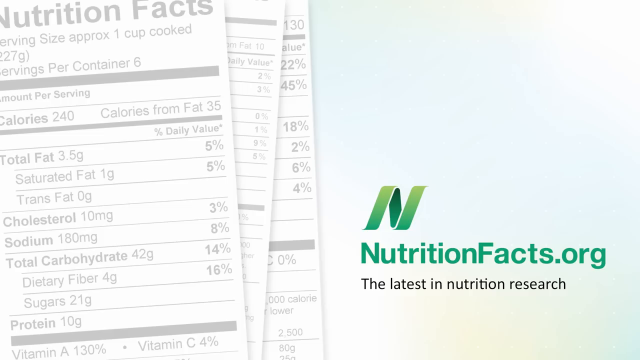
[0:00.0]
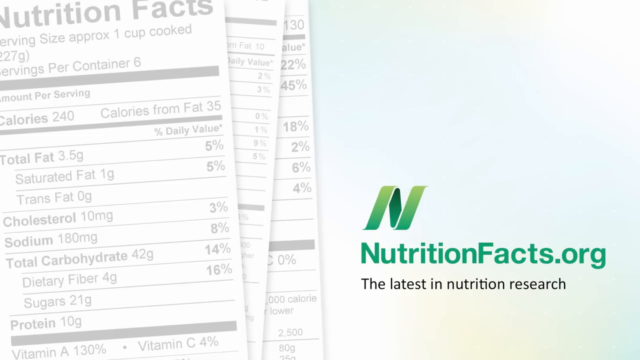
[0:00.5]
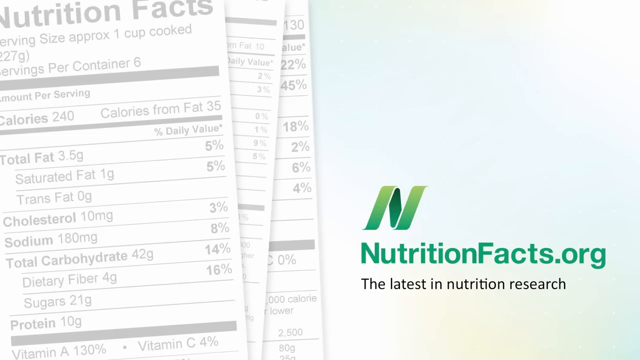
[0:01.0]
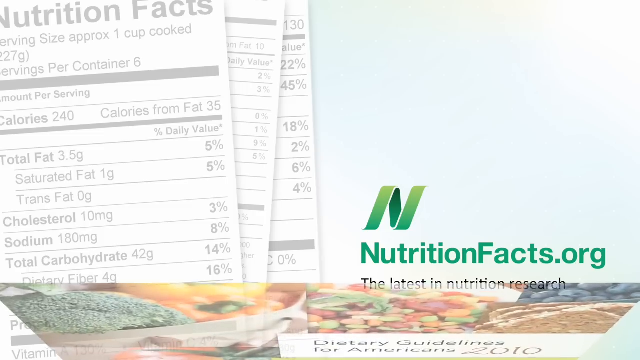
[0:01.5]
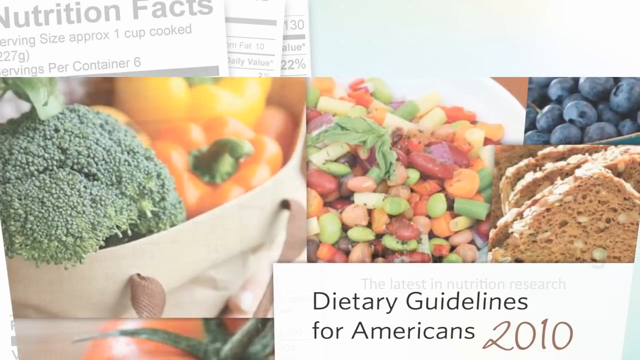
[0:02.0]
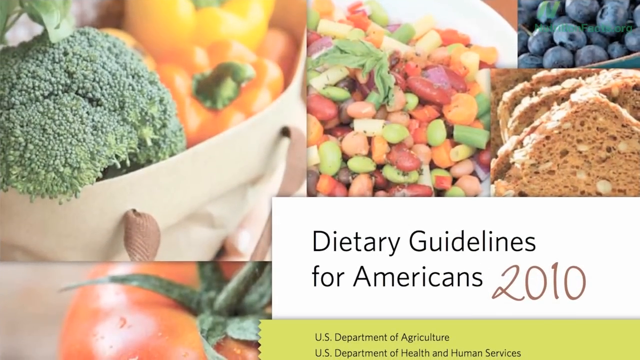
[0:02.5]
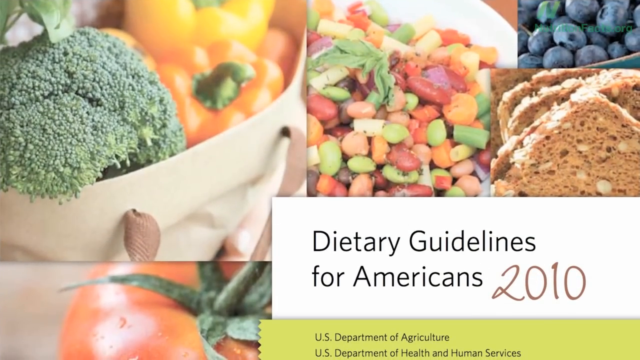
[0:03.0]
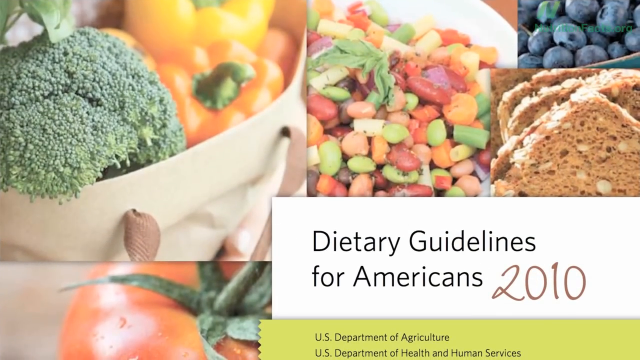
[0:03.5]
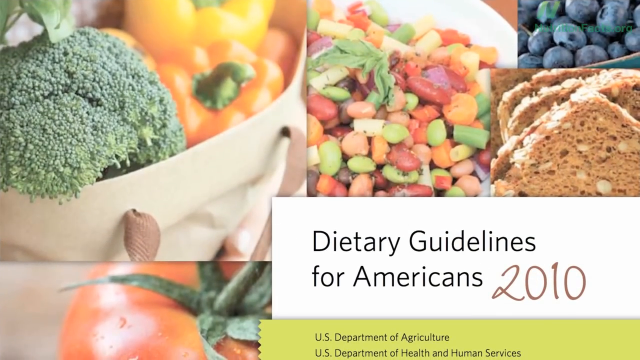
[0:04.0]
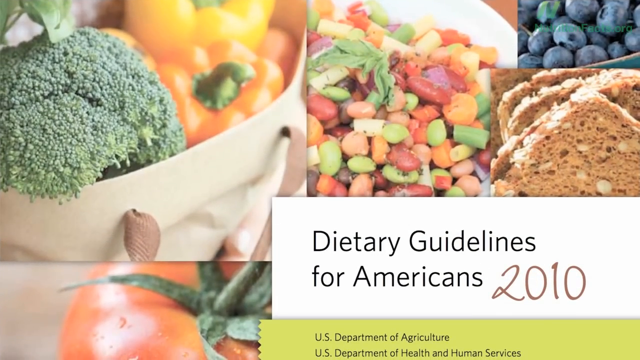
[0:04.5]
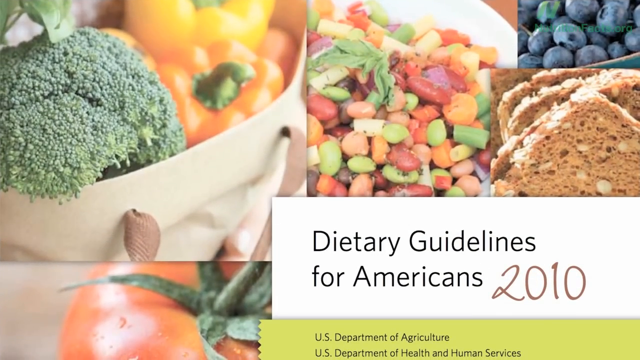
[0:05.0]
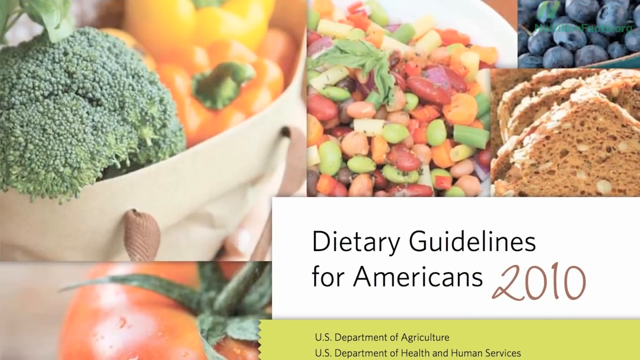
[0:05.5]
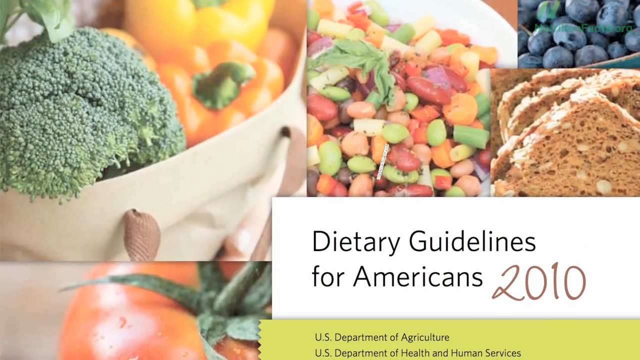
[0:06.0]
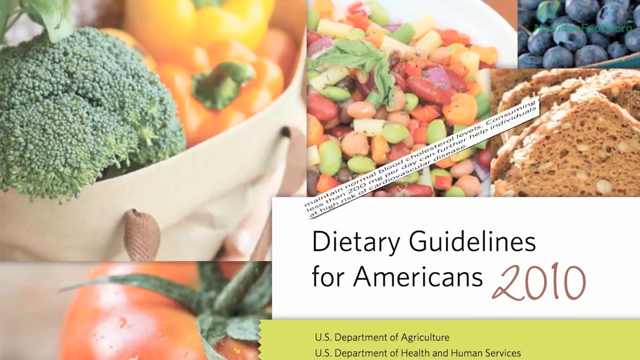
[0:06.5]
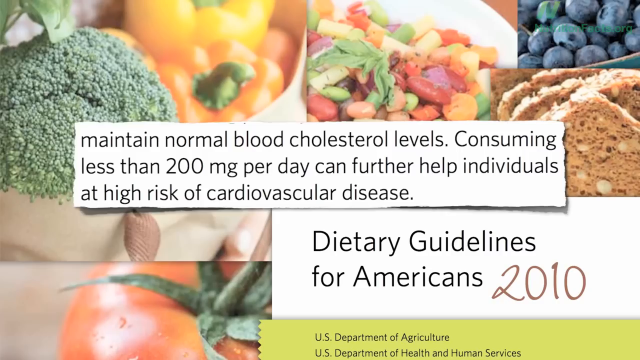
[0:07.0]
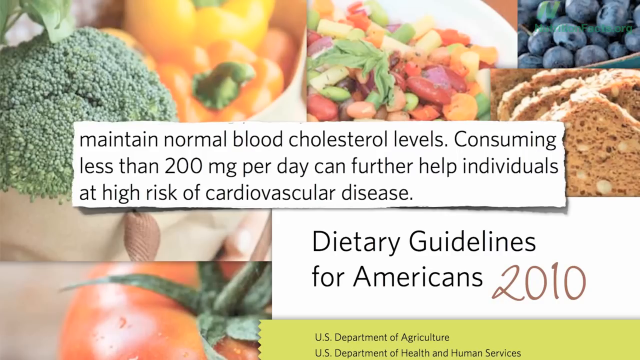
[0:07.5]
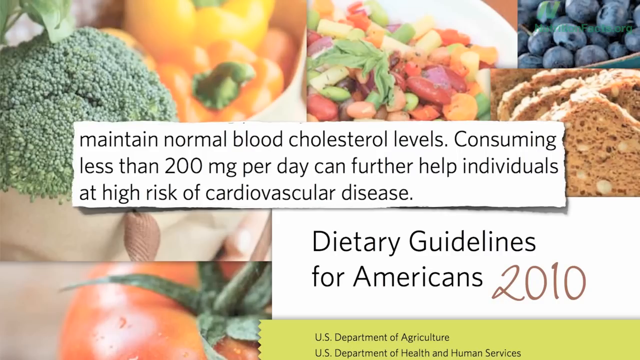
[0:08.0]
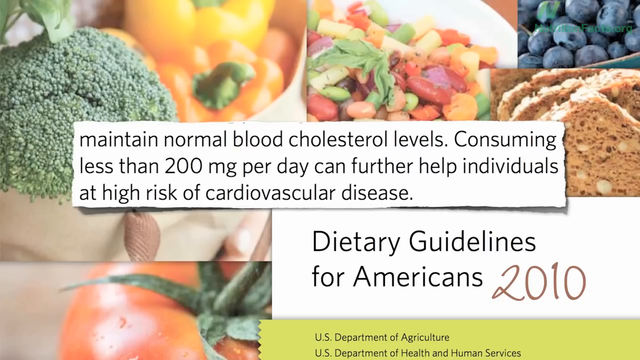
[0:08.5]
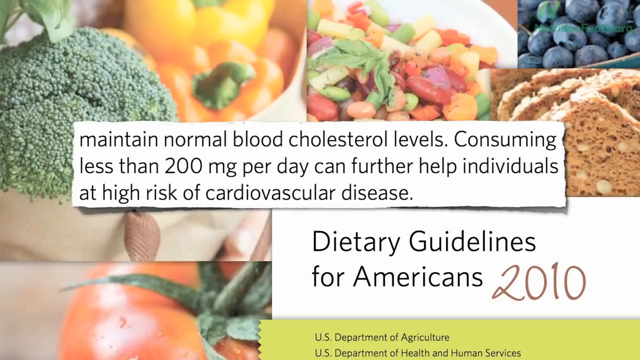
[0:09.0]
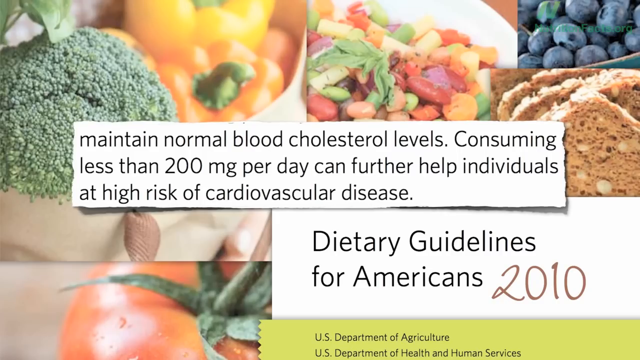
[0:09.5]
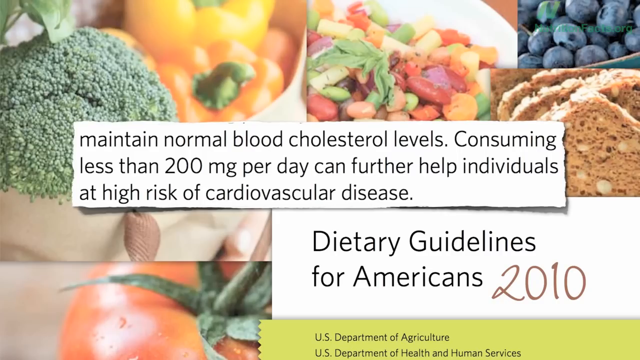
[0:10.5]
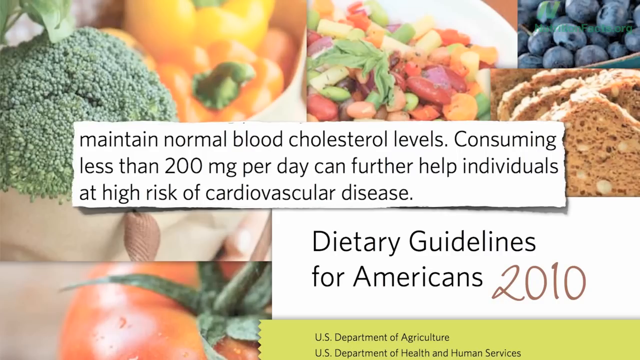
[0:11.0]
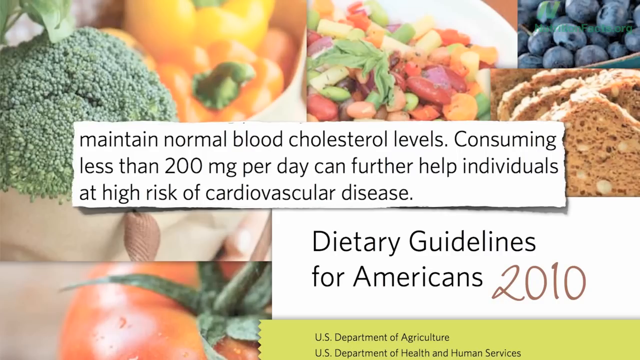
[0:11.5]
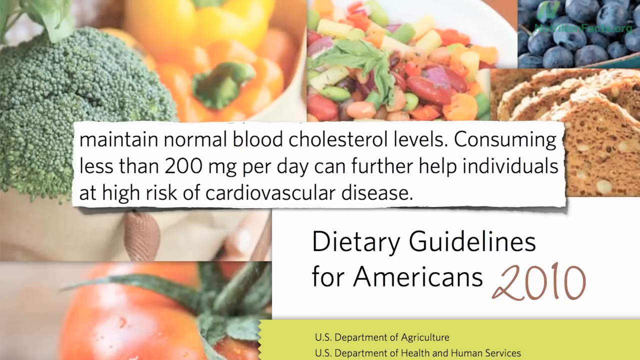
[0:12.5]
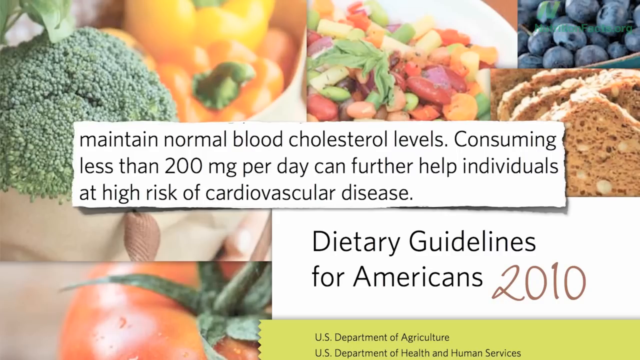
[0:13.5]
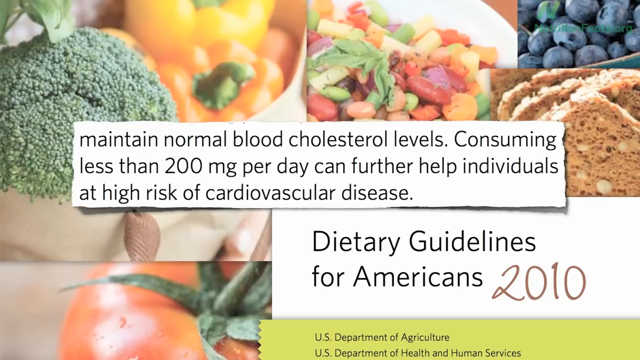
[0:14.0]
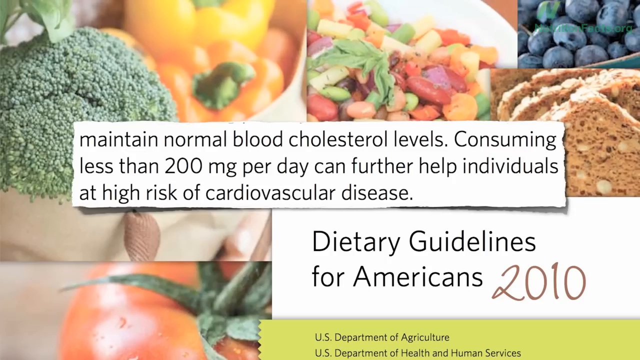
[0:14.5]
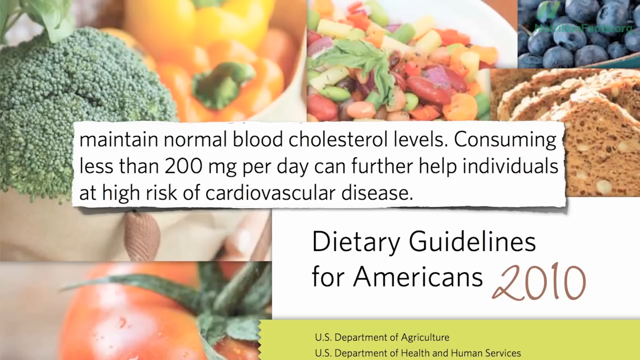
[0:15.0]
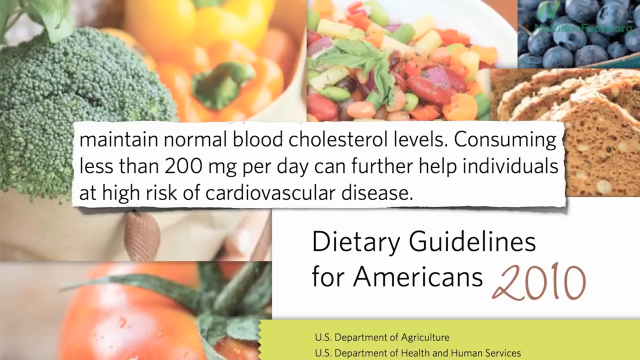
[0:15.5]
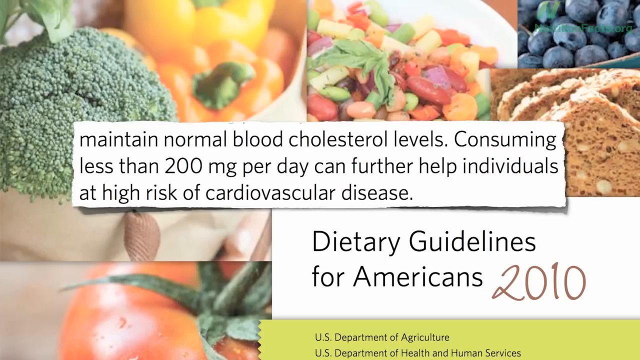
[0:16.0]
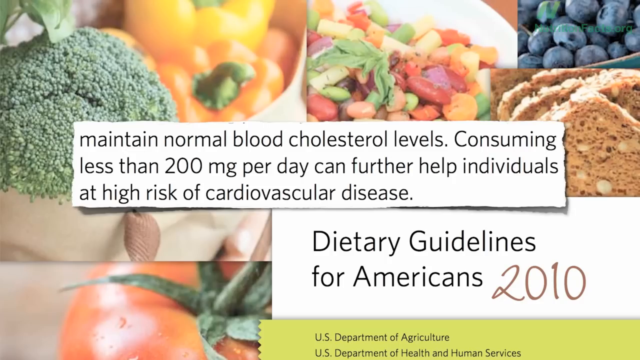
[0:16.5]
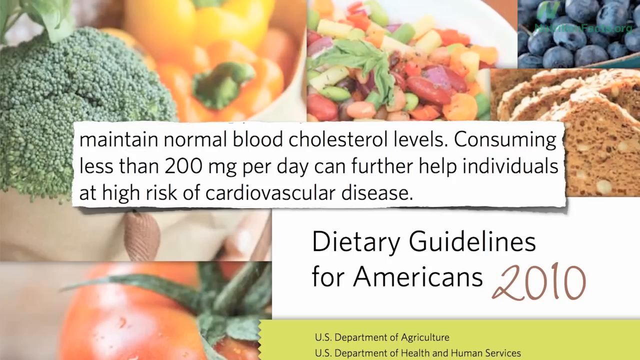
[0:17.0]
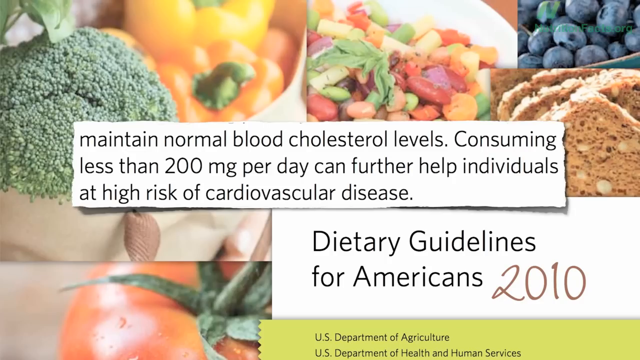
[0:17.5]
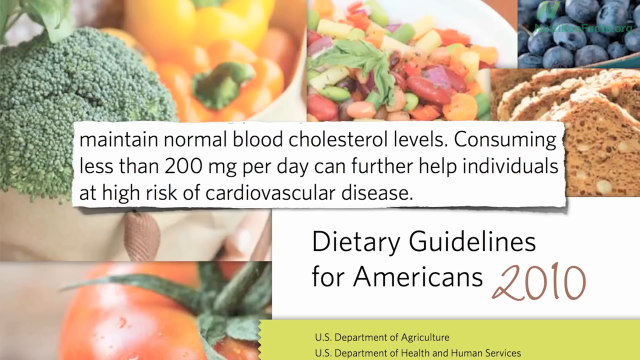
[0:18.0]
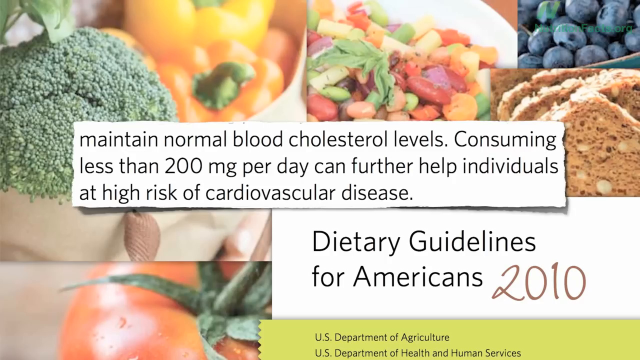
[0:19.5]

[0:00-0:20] The video opens with an image of a bunch of nutritional facts on the left side of the screen and the text "nutritionalfacts.org, the latest in nutrition research" with an N logo in green. An image then kind of flips onto the scene that reads "Dietary Guidelines for Americans 2010", with photos of vegetables kind of collaged together: broccoli, an orange and yellow bell pepper, some type of bean salad with beans, peas and carrots mixed together, some wheat bread with nuts in it, some blueberries, and a close-up shot of a tomato in the background. A text box that looks like a ripped piece of paper comes up on the screen, reading "Maintain normal blood cholesterol levels, consuming less than 200 mg per day can further help individuals at high risk of cardiovascular disease."